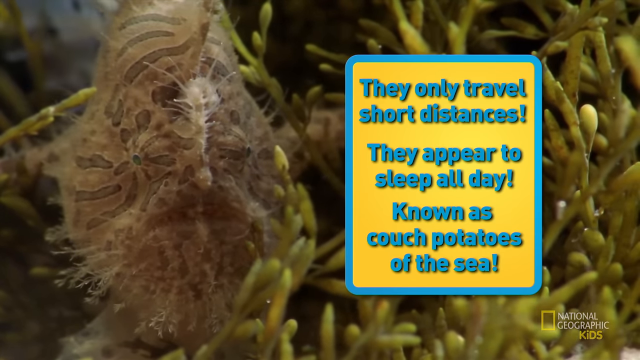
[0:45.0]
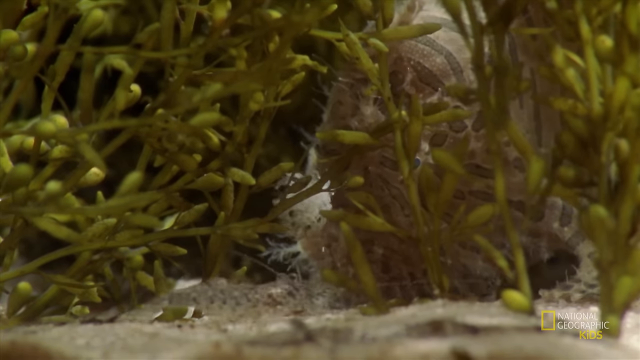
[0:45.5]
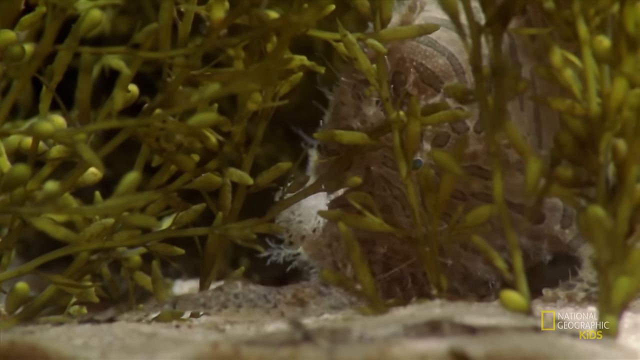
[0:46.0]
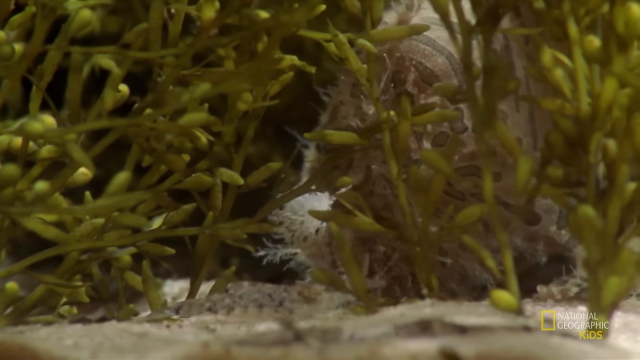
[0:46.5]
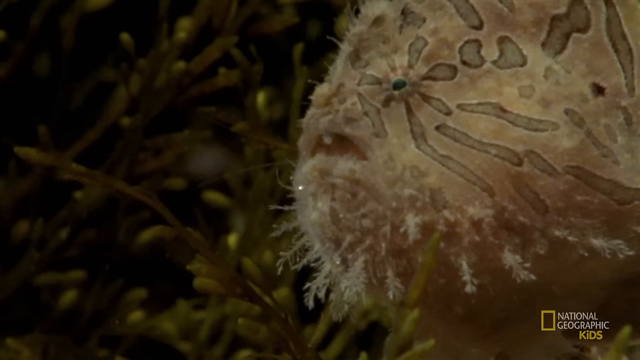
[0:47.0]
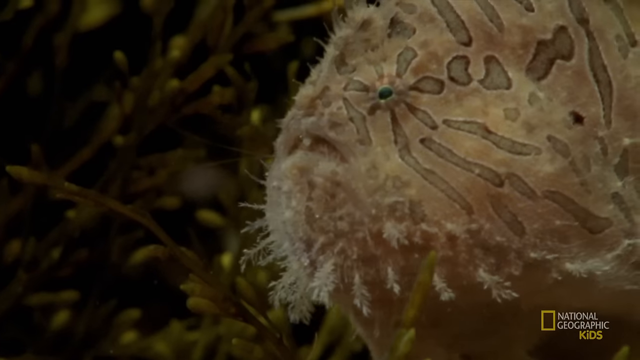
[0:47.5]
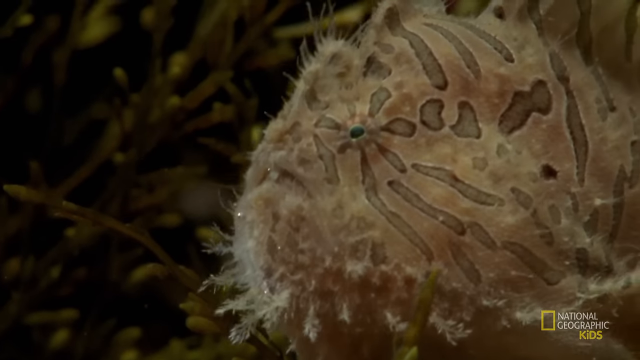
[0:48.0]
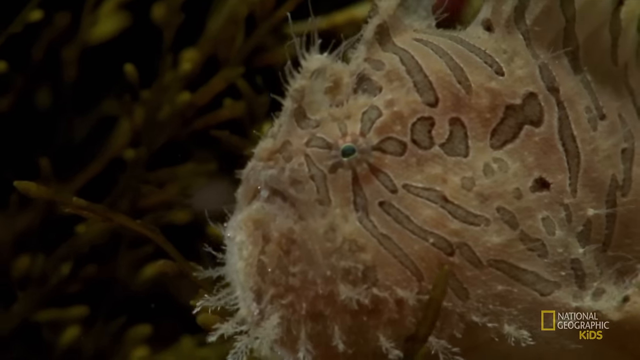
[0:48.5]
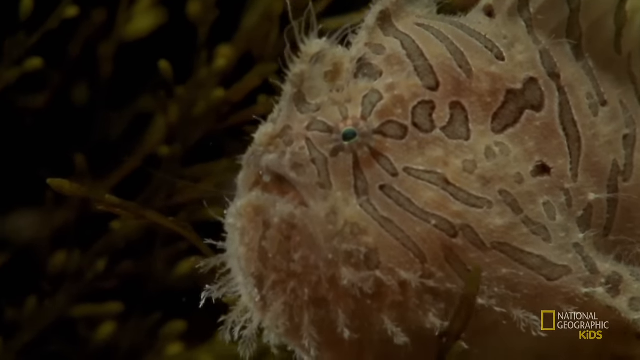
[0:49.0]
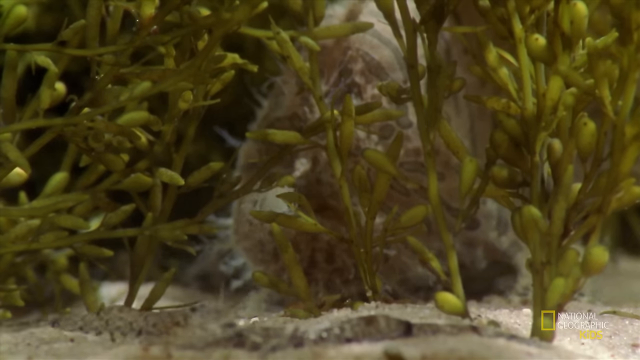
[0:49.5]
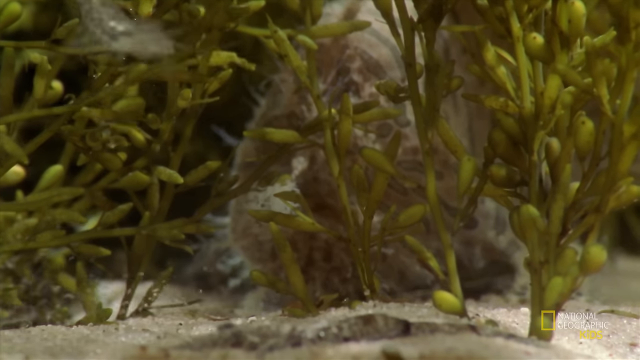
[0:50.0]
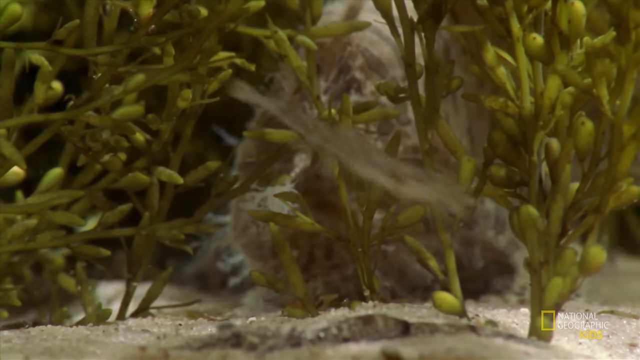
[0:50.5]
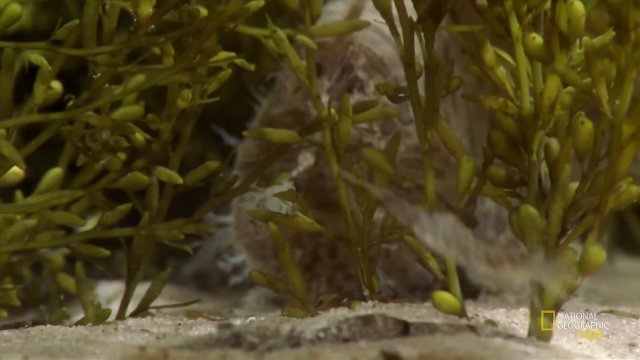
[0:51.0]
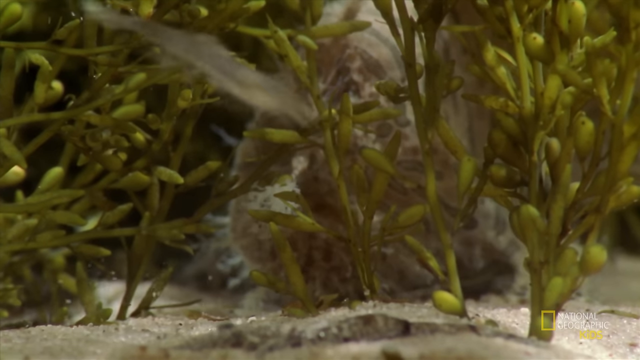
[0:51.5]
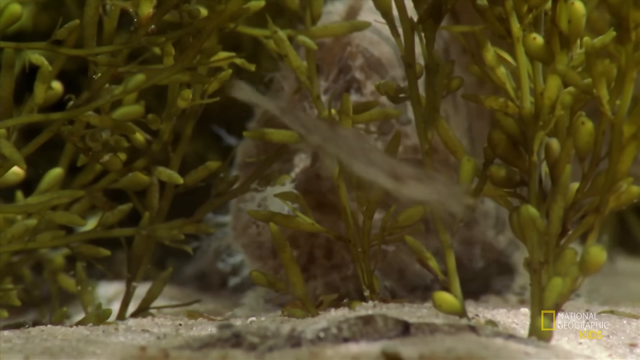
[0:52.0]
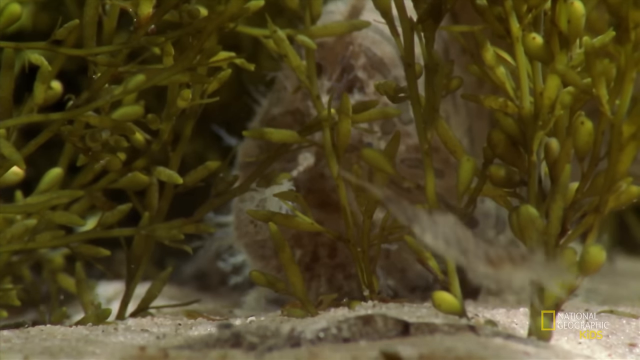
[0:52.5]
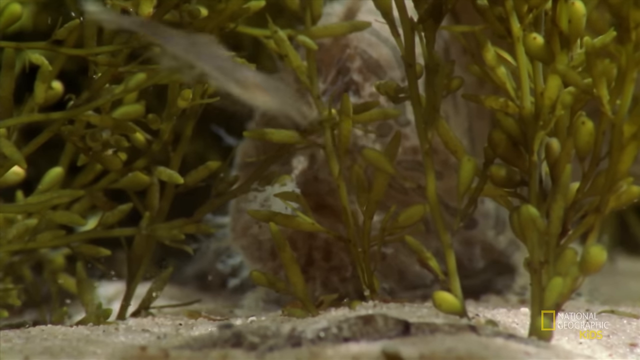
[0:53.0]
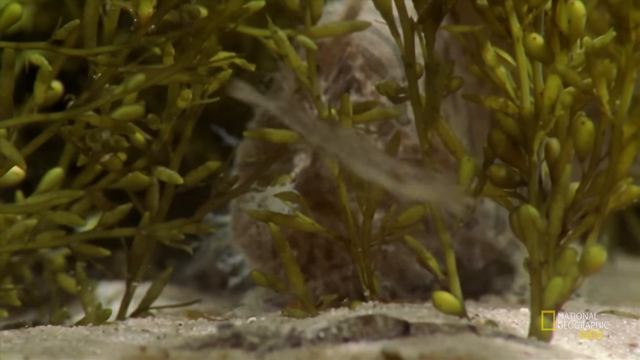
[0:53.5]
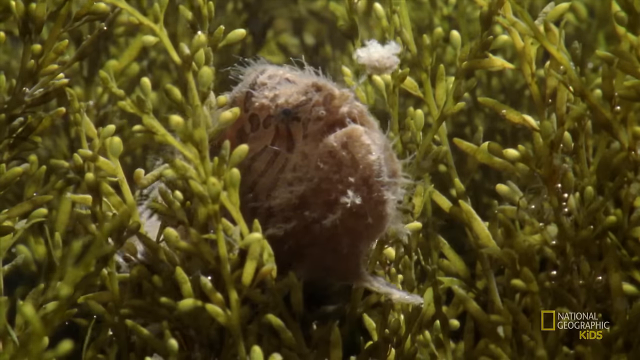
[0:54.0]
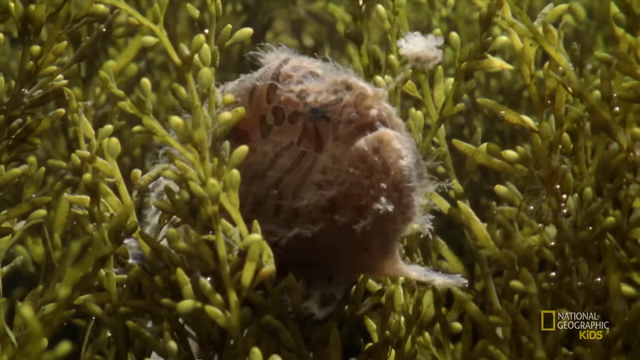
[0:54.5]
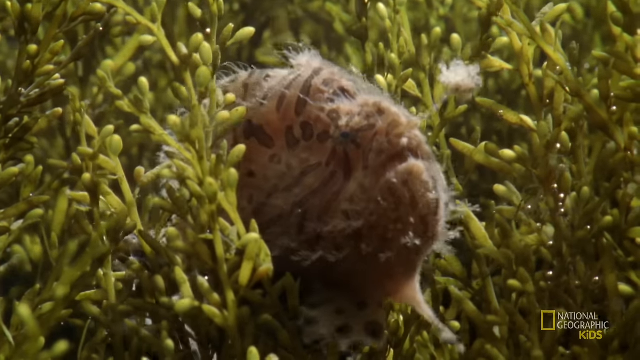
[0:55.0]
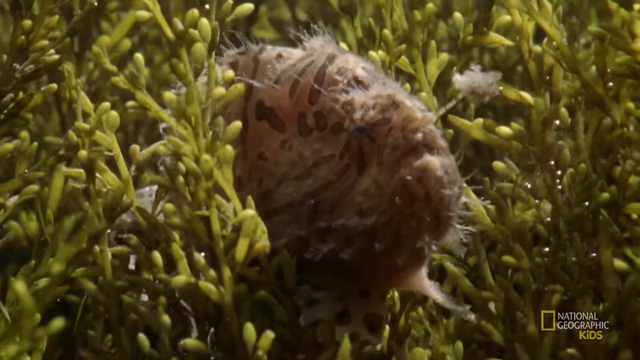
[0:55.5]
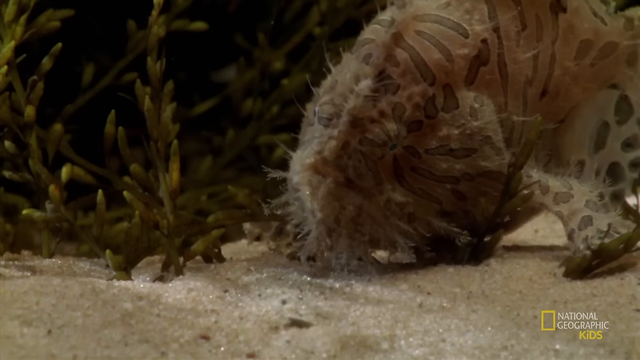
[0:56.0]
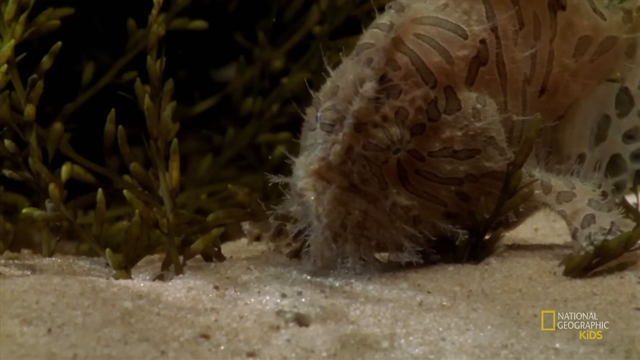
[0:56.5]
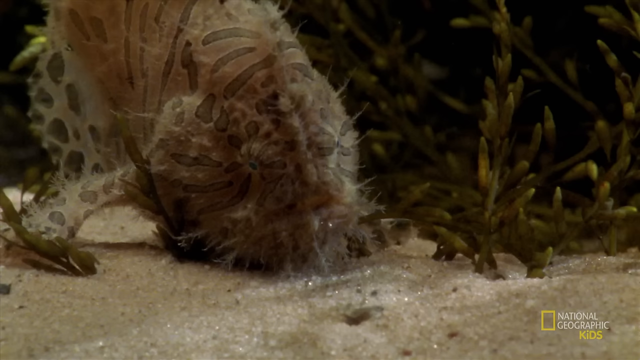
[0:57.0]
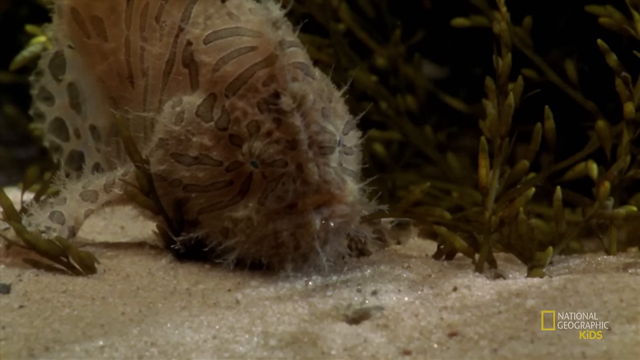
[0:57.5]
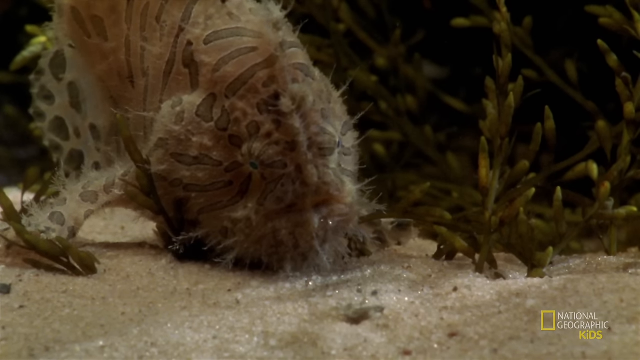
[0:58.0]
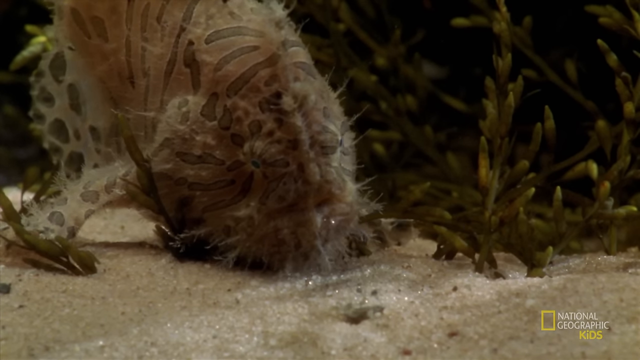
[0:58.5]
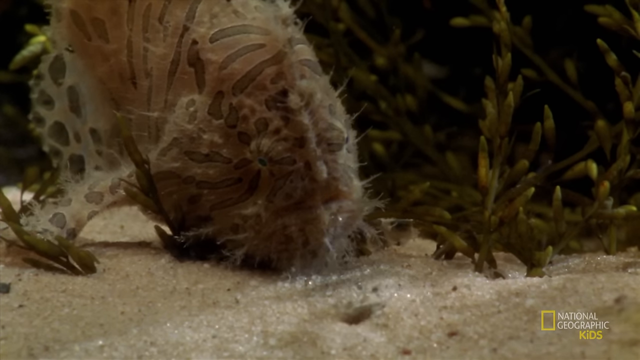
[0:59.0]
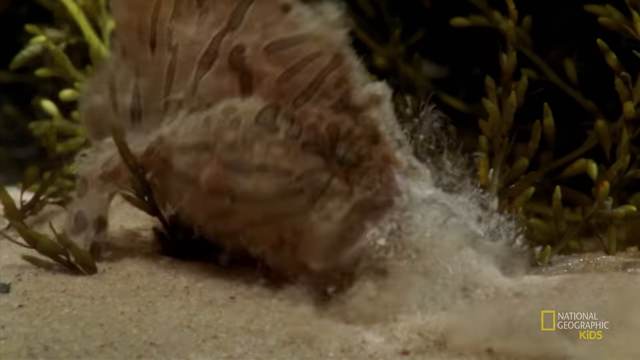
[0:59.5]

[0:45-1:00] More views of the ugly, very strange-looking fish are shown. It hides behind the seagrass and uses it to its advantage when hunting. The fish comes out from the seagrass, then hides in the seagrass, waiting for prey to come by, and then attacks it. The stealth attack is fast and precise, catching the prey by surprise.